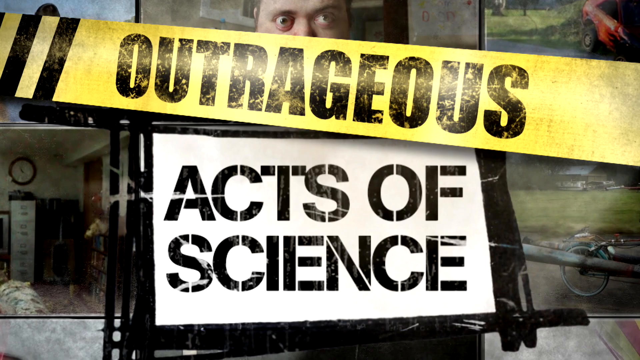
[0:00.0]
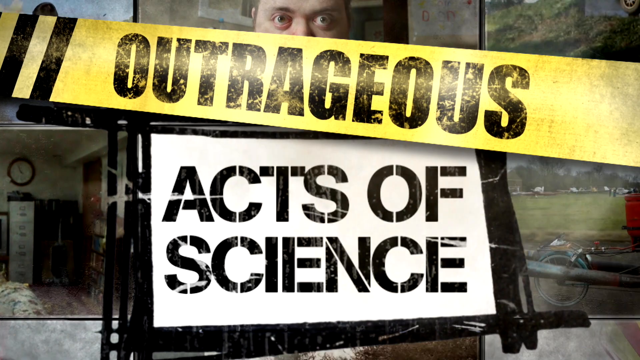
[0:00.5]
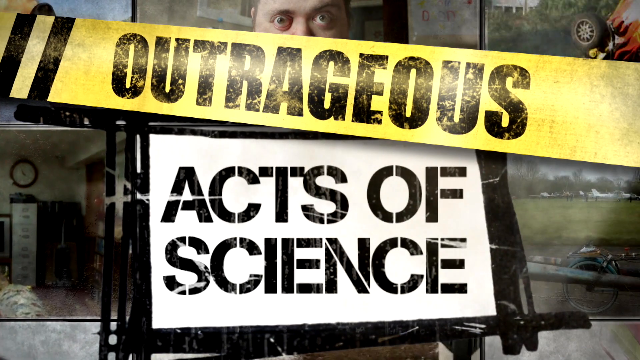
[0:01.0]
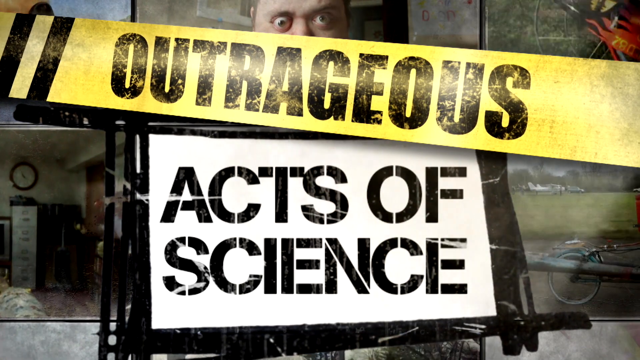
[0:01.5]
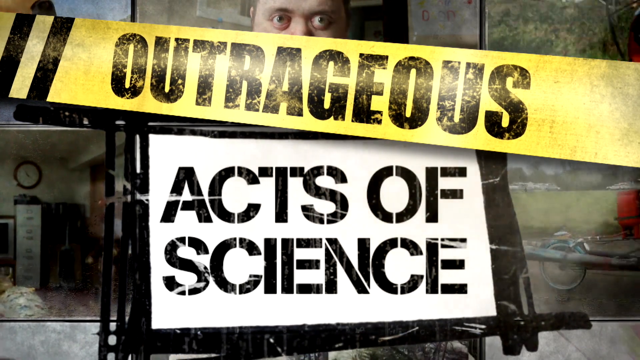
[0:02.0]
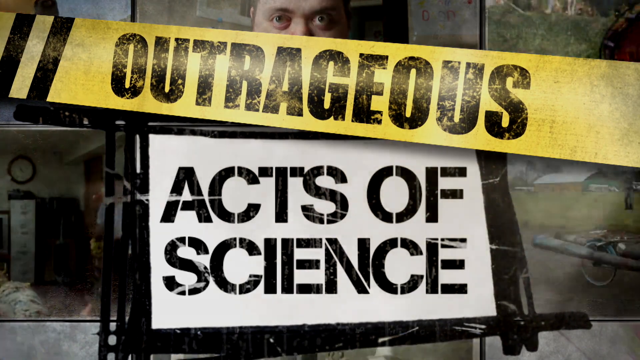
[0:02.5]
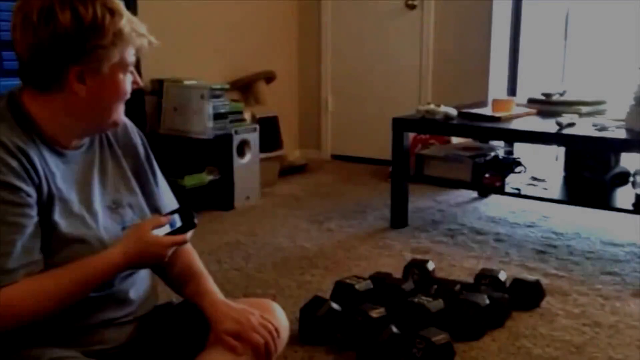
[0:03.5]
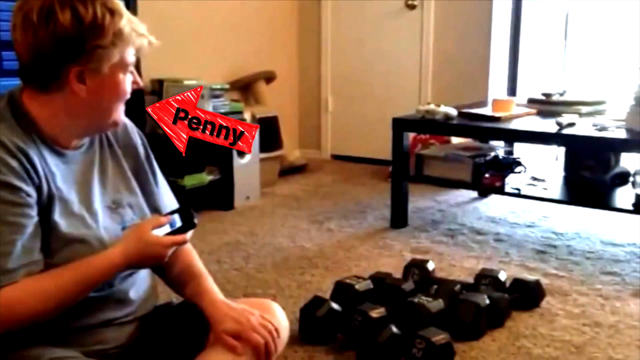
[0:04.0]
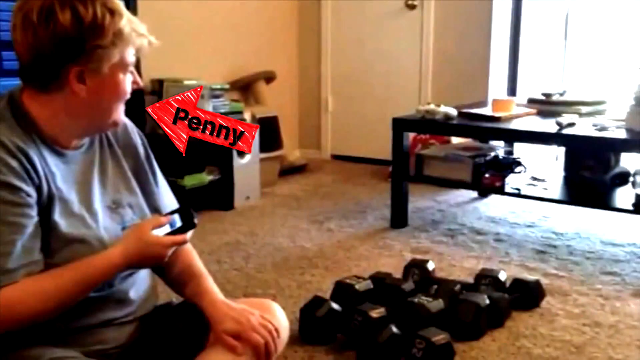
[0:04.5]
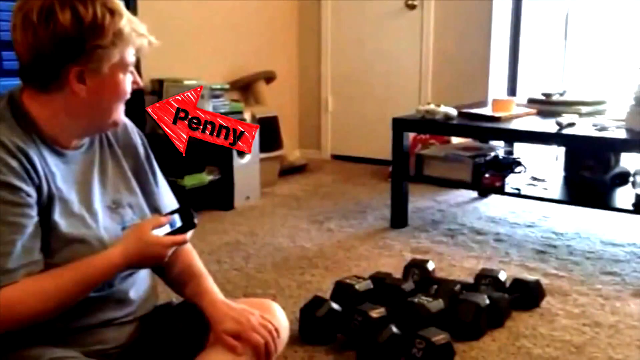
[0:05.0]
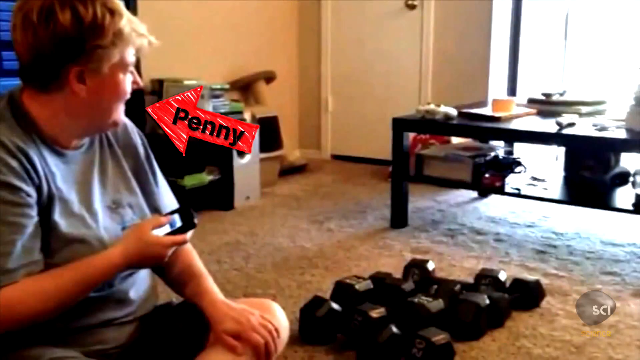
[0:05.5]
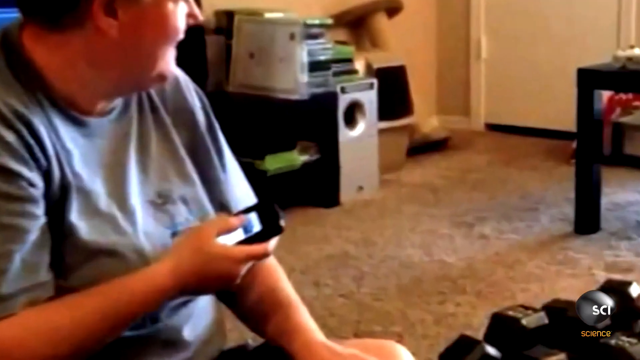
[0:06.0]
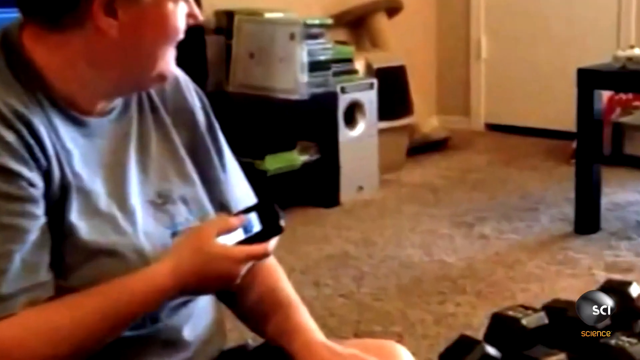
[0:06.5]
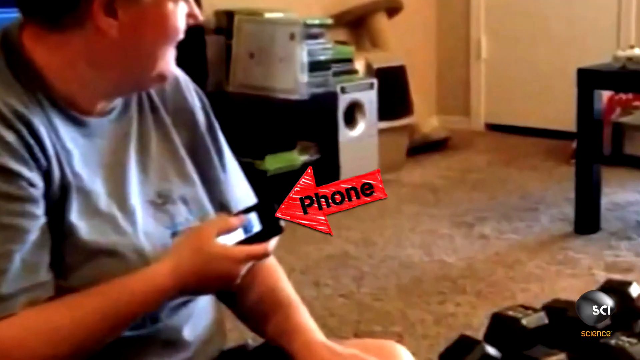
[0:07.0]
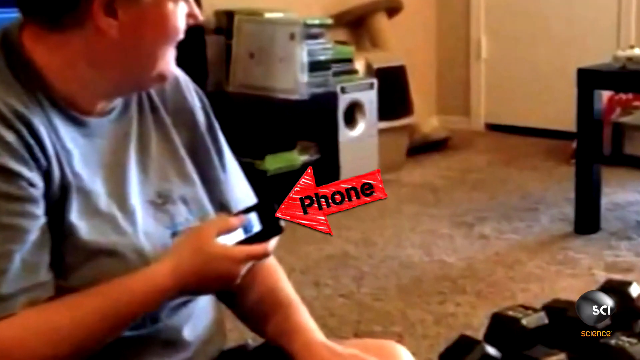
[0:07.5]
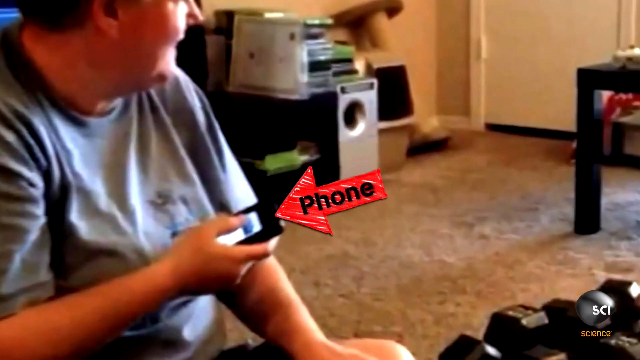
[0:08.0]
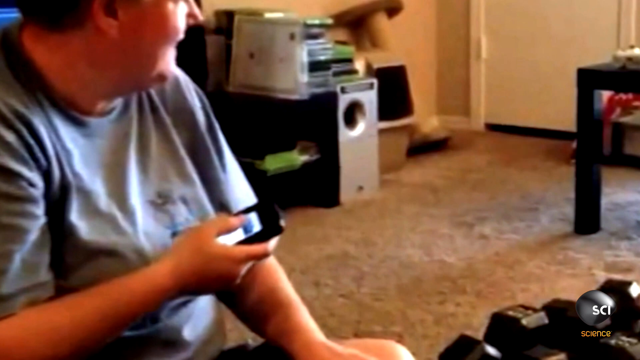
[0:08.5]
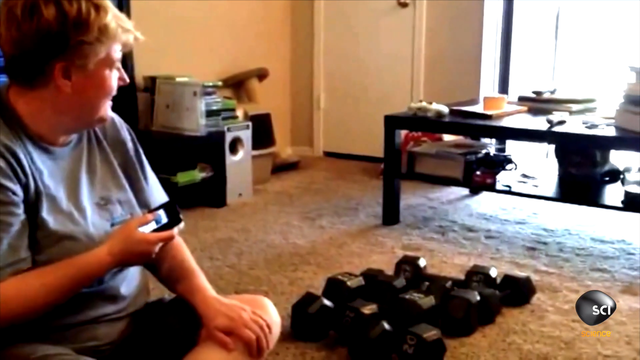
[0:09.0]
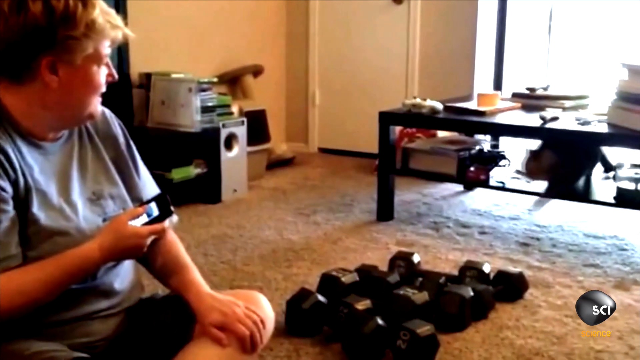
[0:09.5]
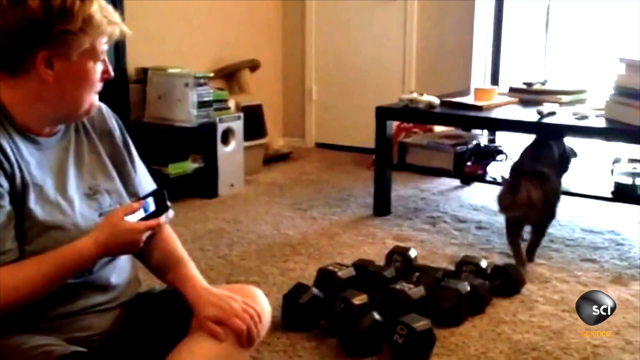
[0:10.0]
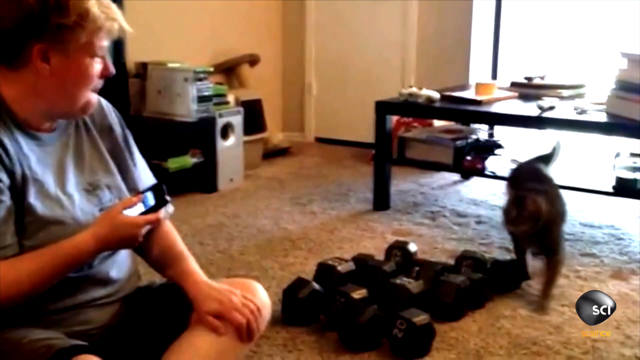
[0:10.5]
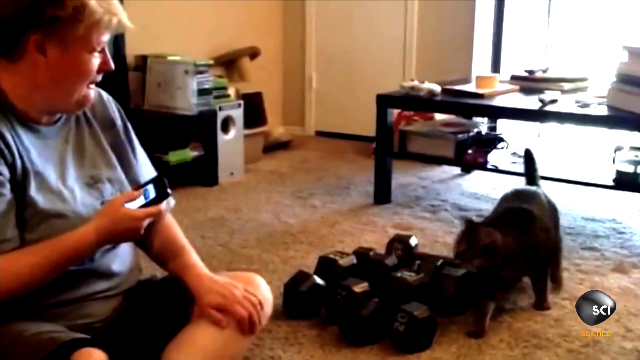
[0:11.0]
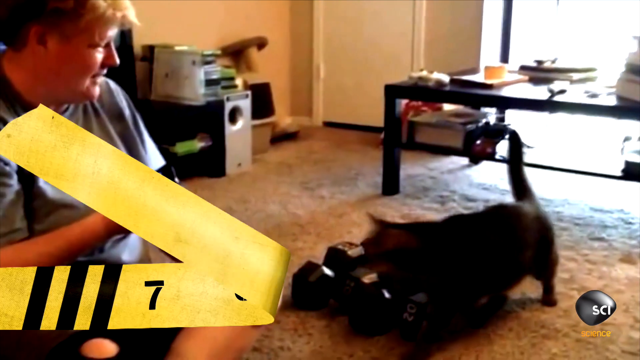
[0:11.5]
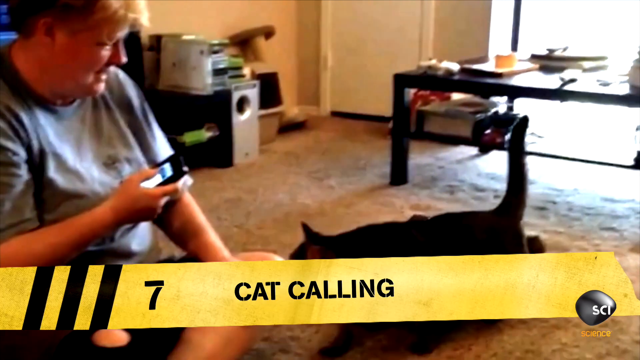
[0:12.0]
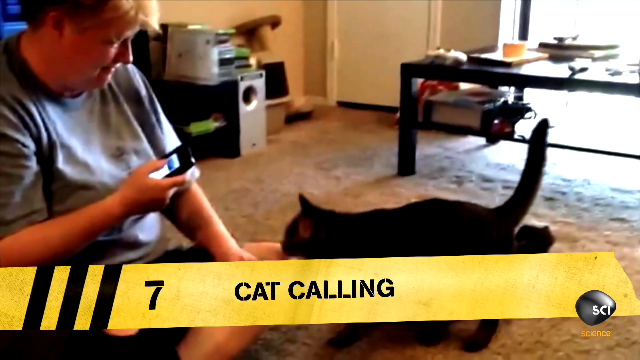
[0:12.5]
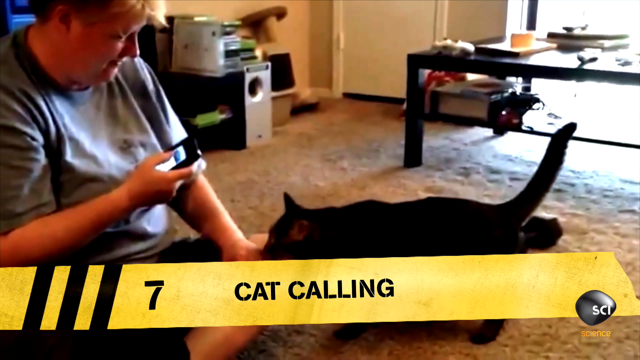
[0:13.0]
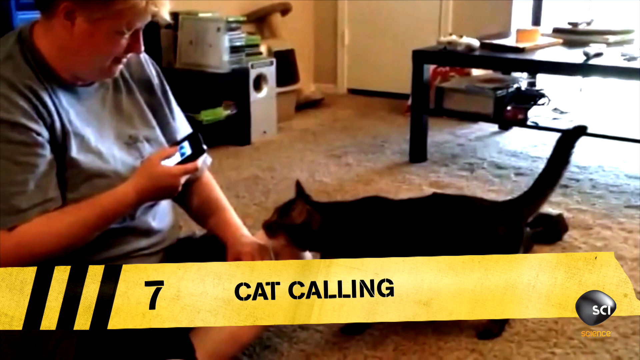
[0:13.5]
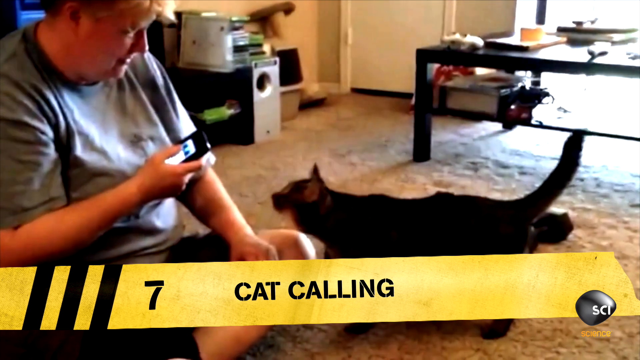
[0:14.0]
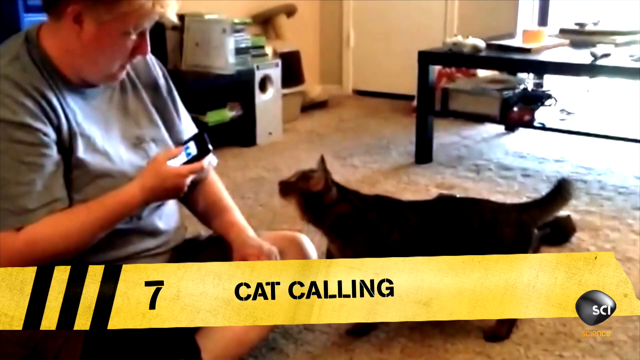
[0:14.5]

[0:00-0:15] The video identifies itself as "Outrageous Acts of Science". A woman identified as Penny wears a light gray t-shirt and black shorts and has short, sandy blonde hair. In her right hand she holds a smartphone, her thumb positioned over an open screen. She appears to be sitting in a living room with tannish carpet, and a dark end table is on the right of the screen. She uses her phone, possibly to call a cat. The cat, a dark gray striped tabby, approaches her from the right side of the screen. Below the cat is a label with a yellow background and black text reading "Cat Calling". The woman looks at the cat as if expecting it to come, and the cat looks expectant, as if waiting for pets. Whatever she has done with her phone has attracted the cat. The cat had been sitting in what appears to be a sliding glass door, and as it approaches its owner it knocks several hanging white blinds.